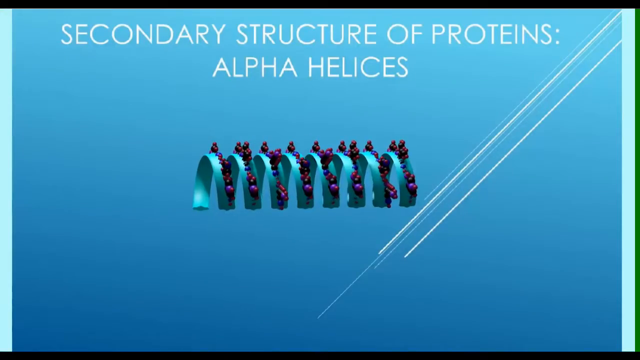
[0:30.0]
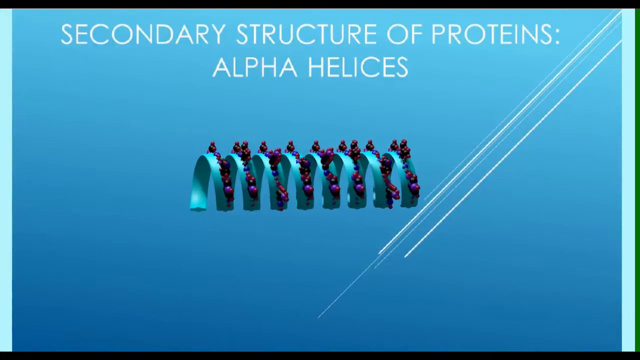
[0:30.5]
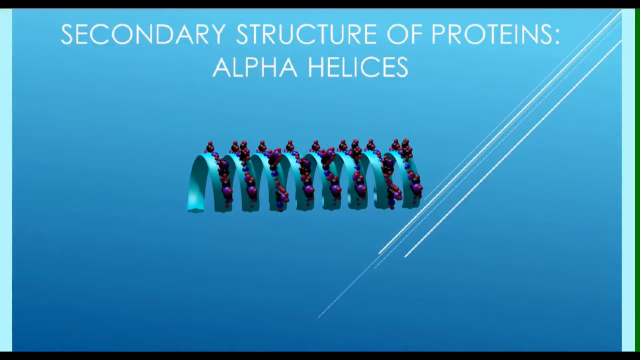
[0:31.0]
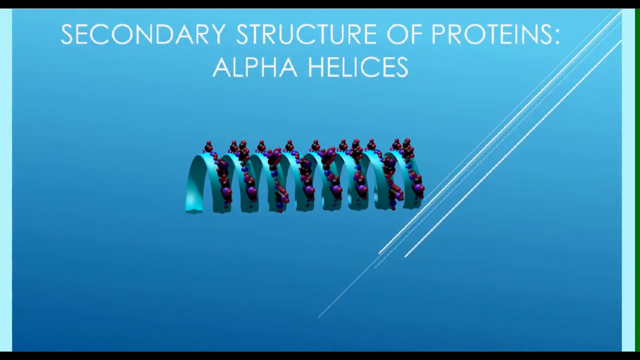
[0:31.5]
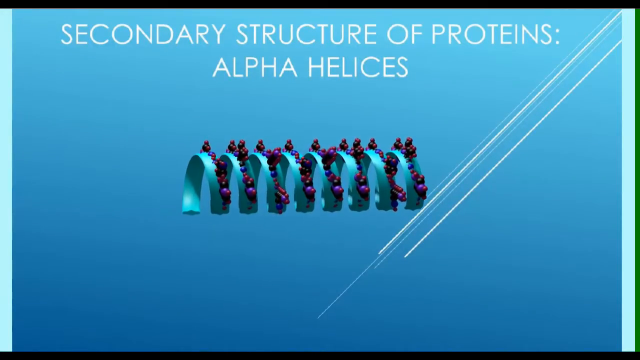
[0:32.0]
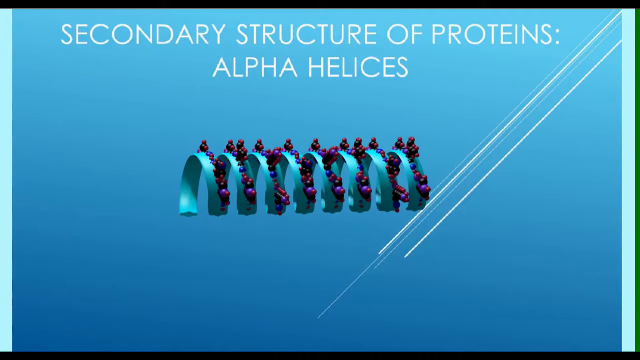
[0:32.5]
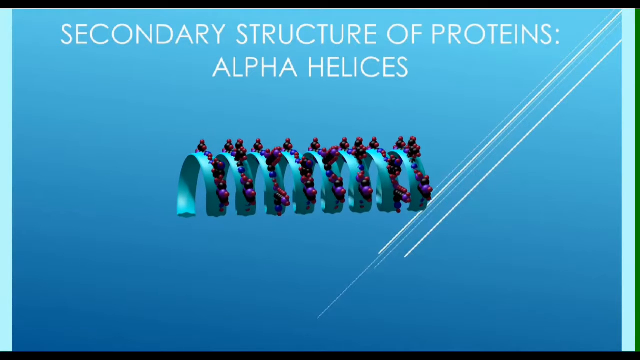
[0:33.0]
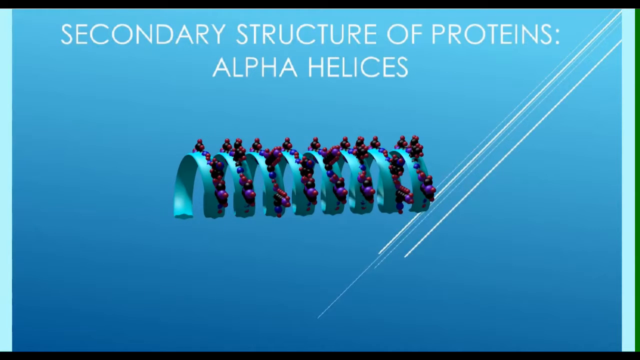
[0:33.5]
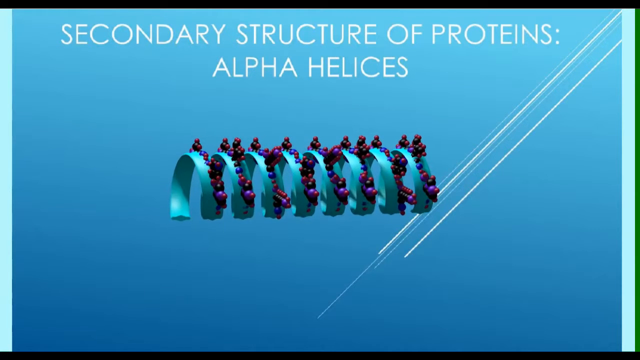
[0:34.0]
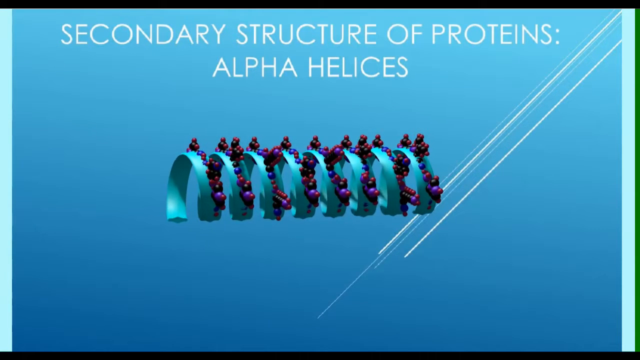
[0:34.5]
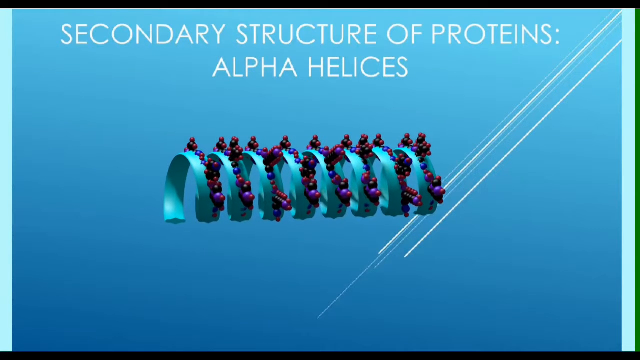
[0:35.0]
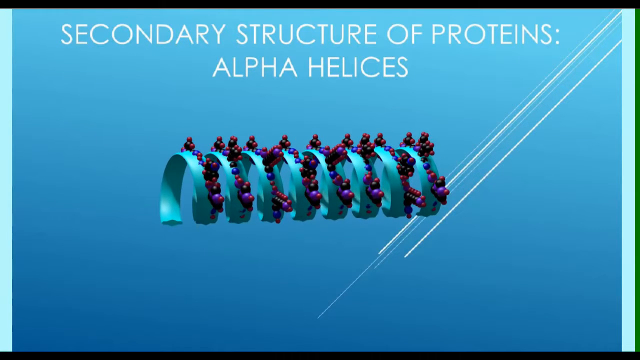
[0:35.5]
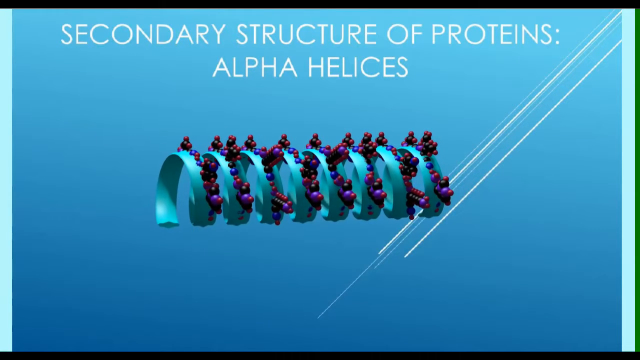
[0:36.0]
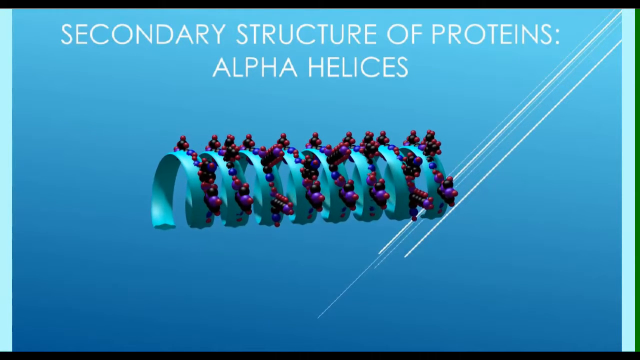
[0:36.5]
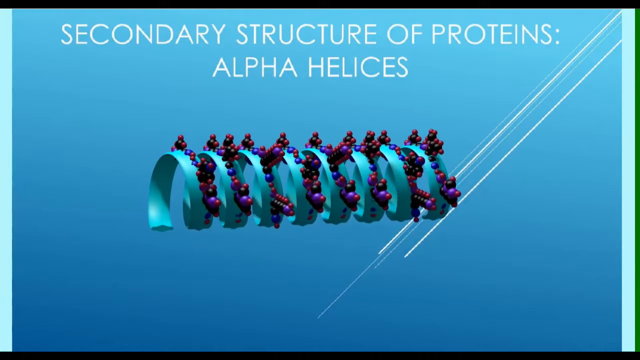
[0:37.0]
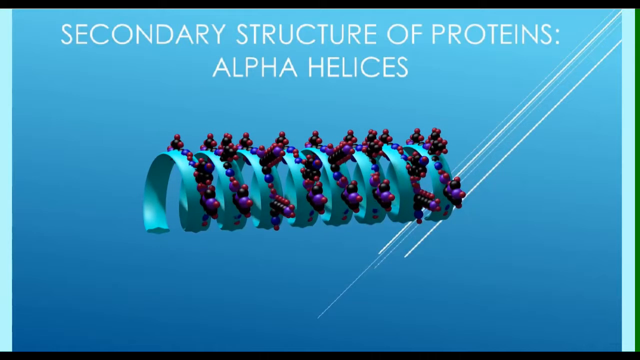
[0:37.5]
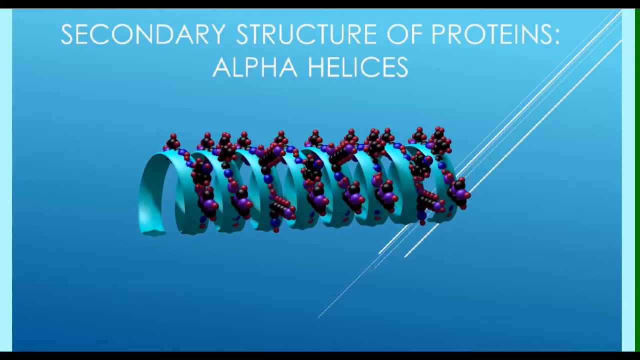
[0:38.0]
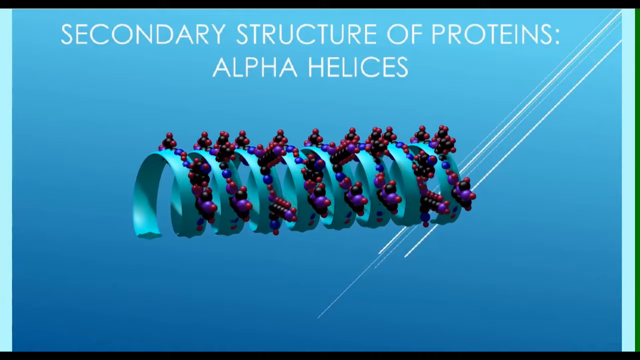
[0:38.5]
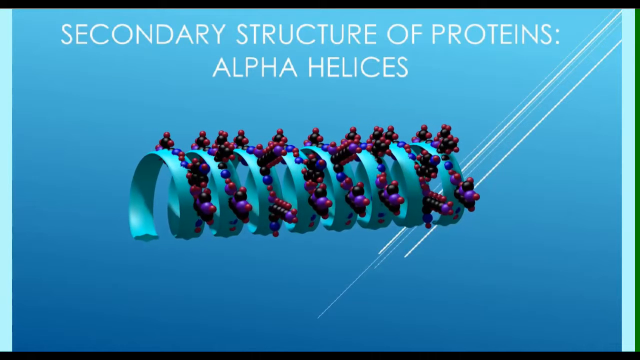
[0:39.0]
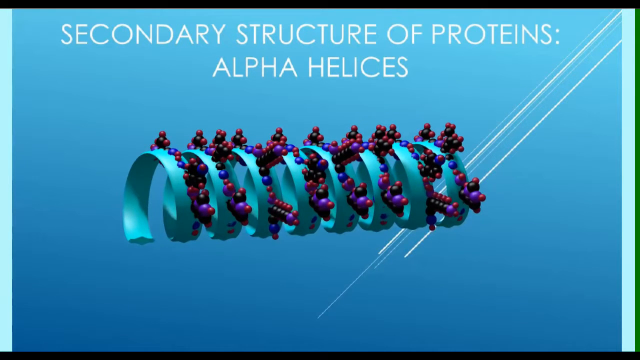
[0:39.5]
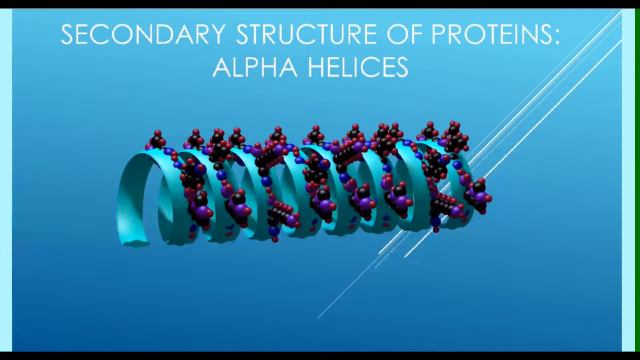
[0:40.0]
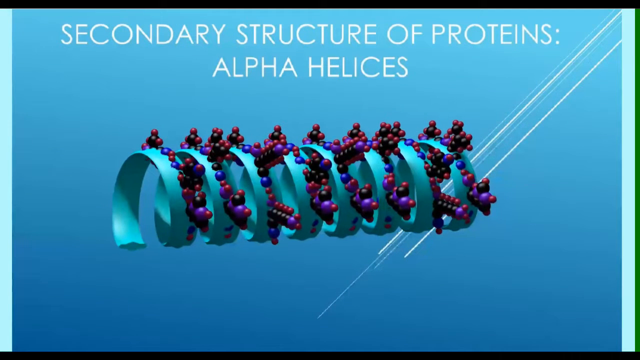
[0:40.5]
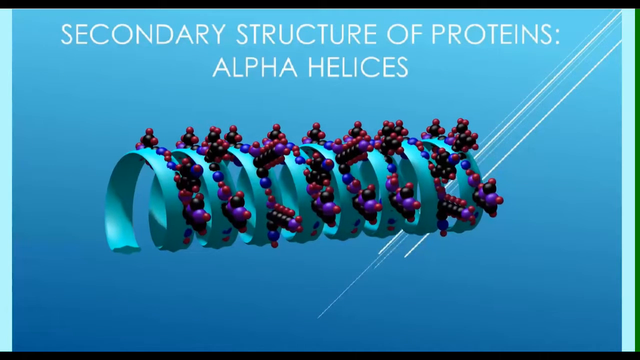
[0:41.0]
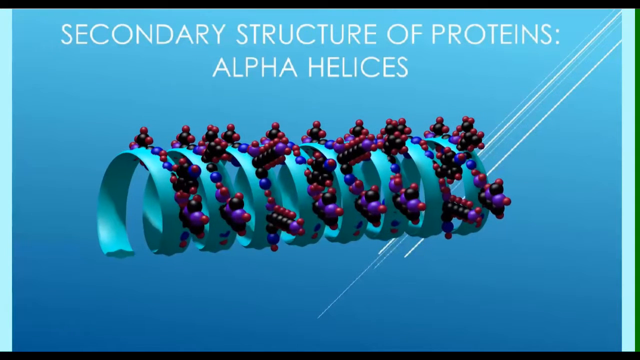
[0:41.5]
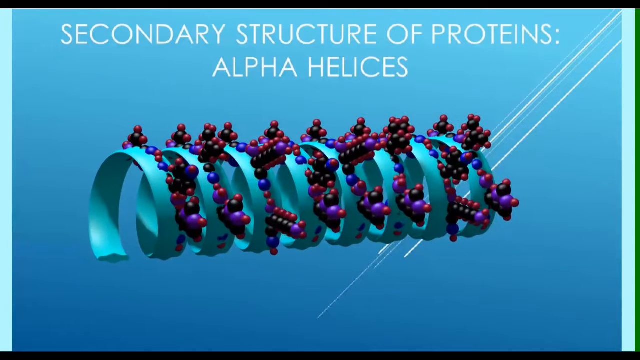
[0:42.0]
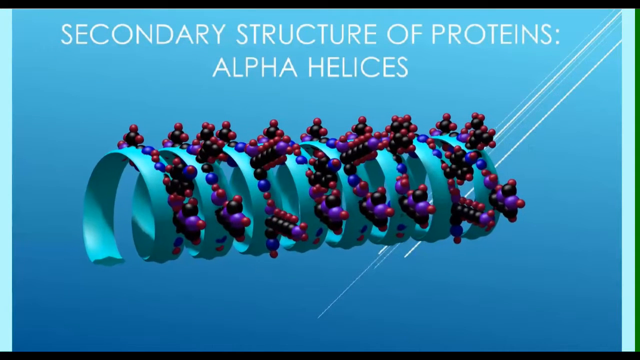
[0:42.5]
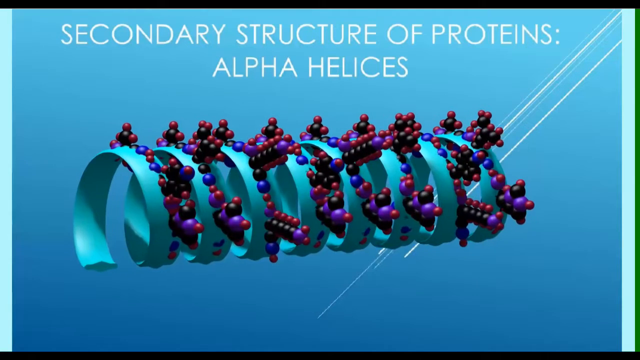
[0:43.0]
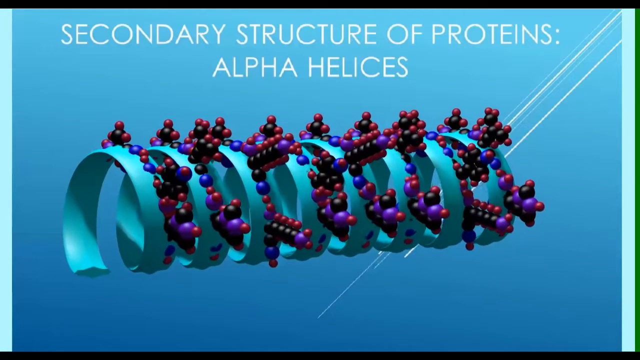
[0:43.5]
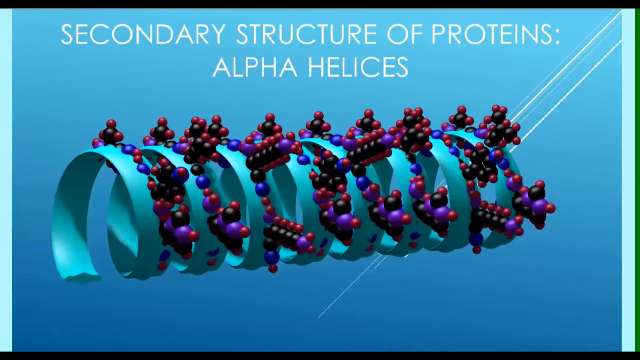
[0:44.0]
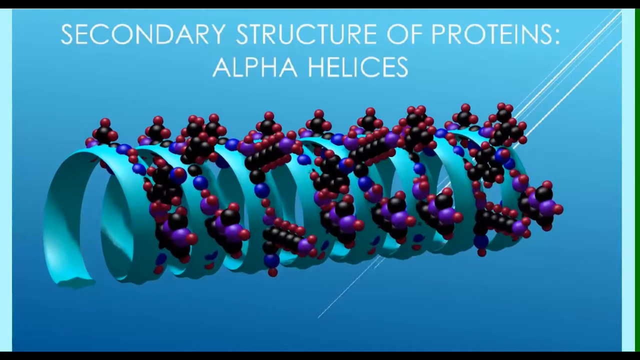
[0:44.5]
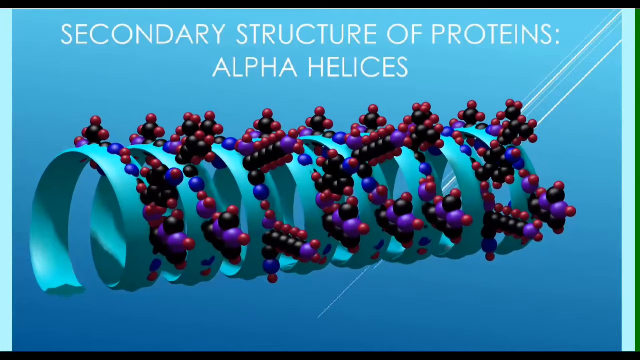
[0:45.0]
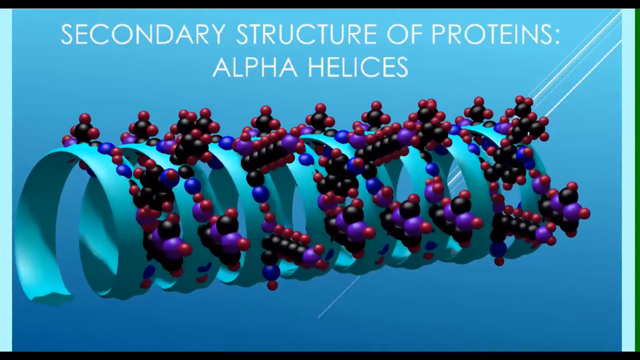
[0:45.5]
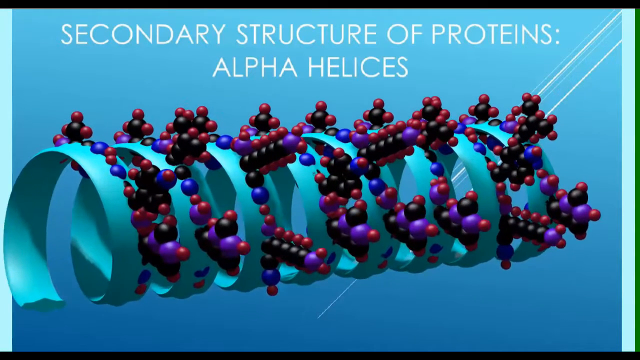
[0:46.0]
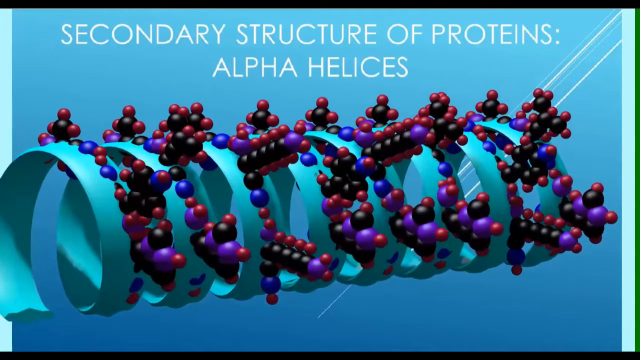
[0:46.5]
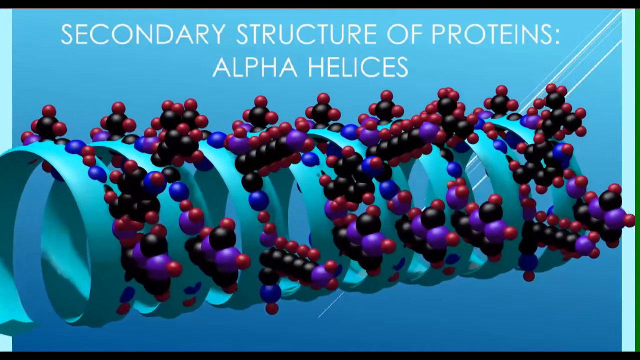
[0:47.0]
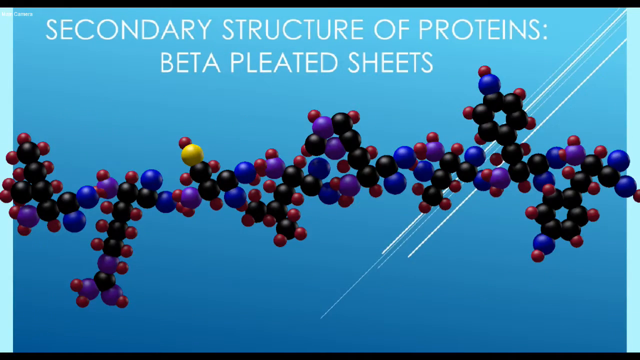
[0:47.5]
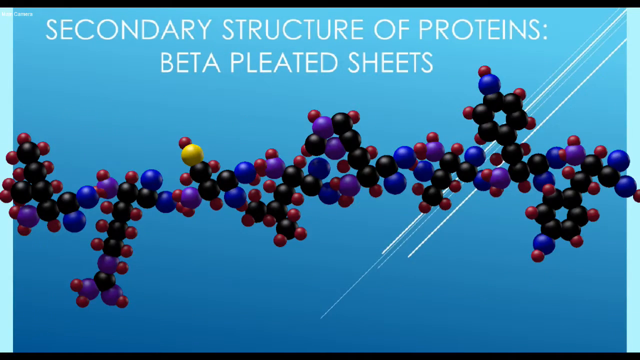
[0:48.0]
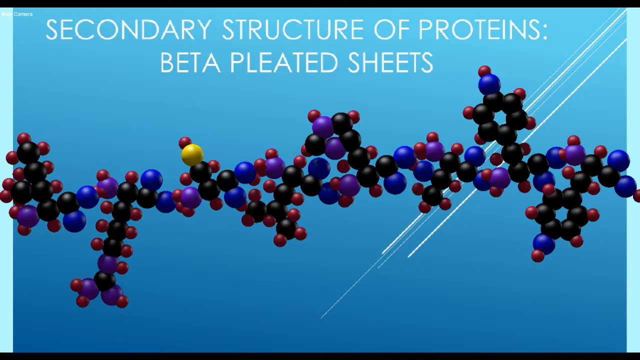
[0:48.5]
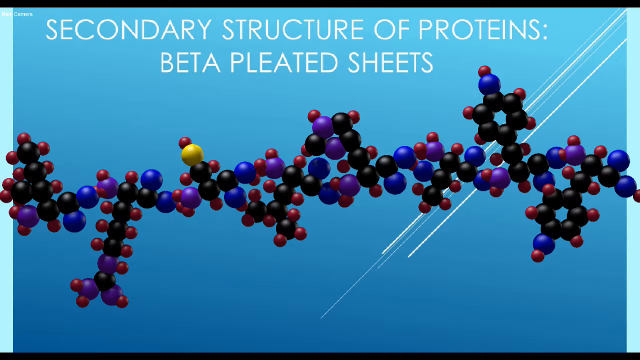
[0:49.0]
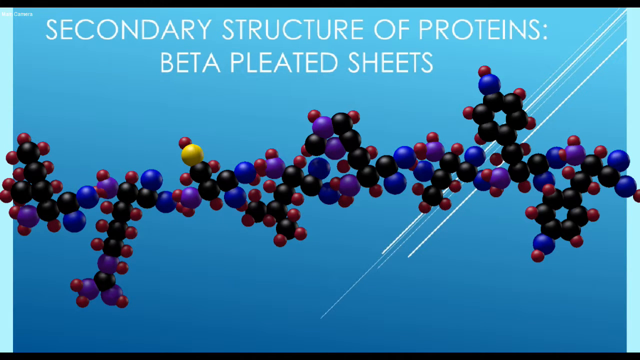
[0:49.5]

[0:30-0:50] The secondary structure of protein alpha scene shows the small blue spindle covered in proteins against a dark blue background, with white lines at the top right running from the top right toward the bottom middle. The scene transitions slowly, seemingly at a very slow frame rate, and appears to last for quite a while. After about 17 seconds it changes to the small circular units again, with text reading "secondary structure of the protein beta". The circles are black, red, blue and purple, with a single yellow one among them. The view holds on that freeze frame for a bit.